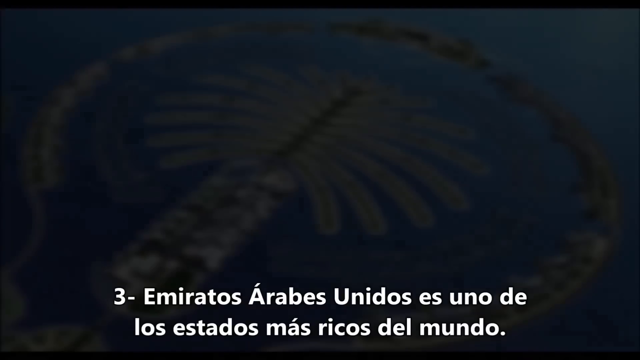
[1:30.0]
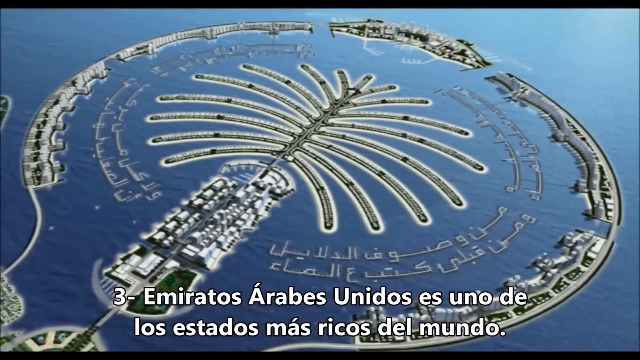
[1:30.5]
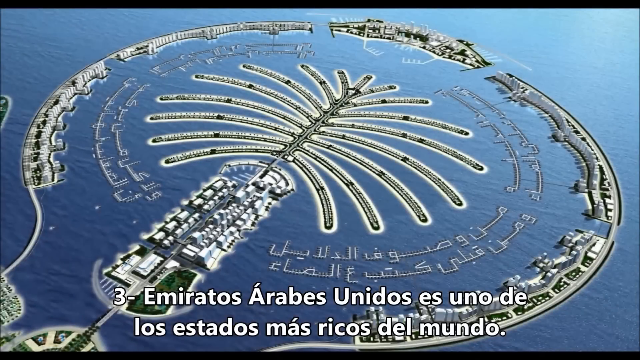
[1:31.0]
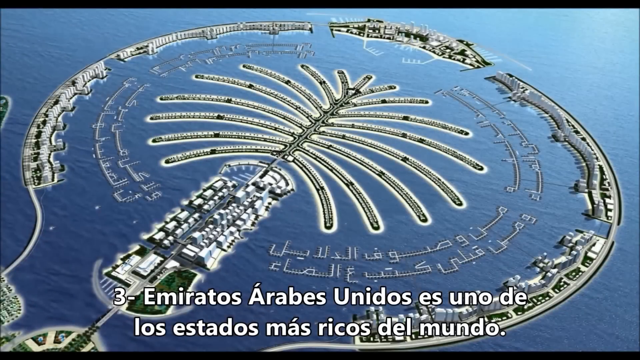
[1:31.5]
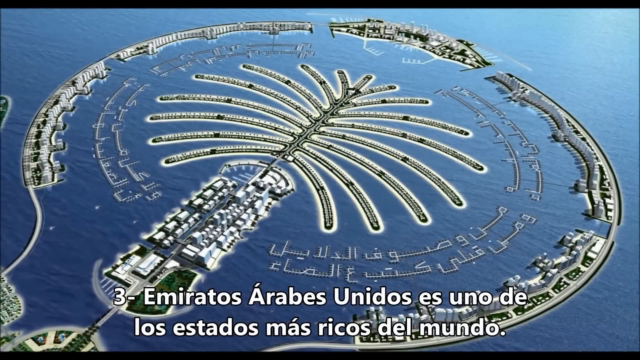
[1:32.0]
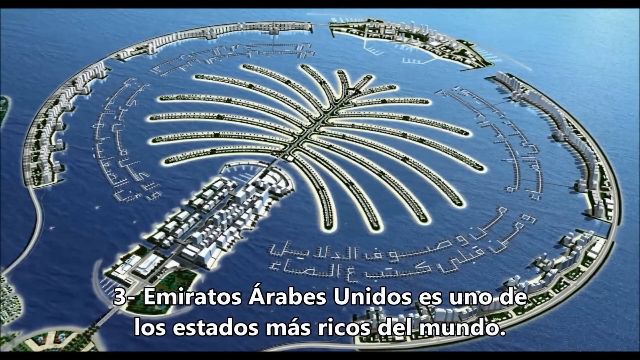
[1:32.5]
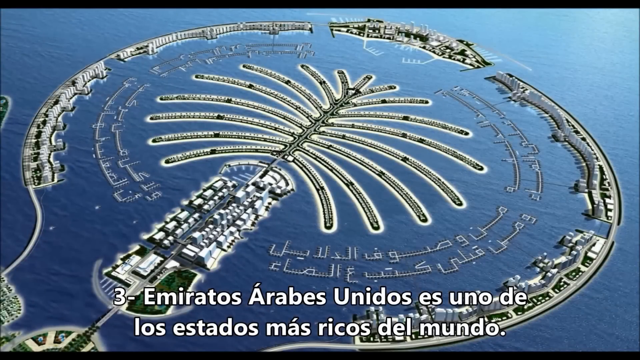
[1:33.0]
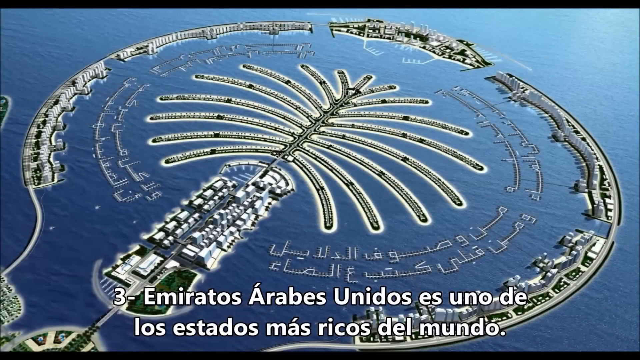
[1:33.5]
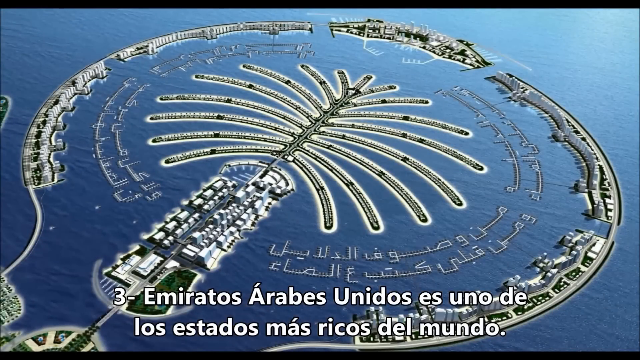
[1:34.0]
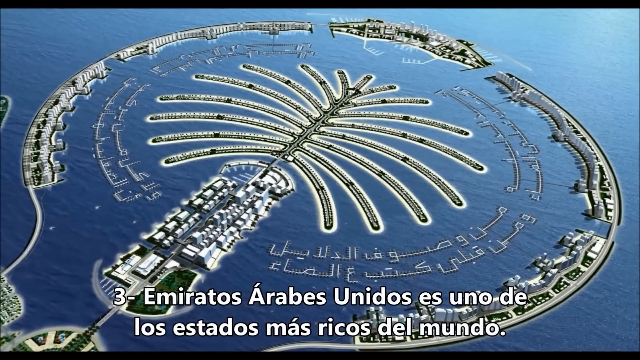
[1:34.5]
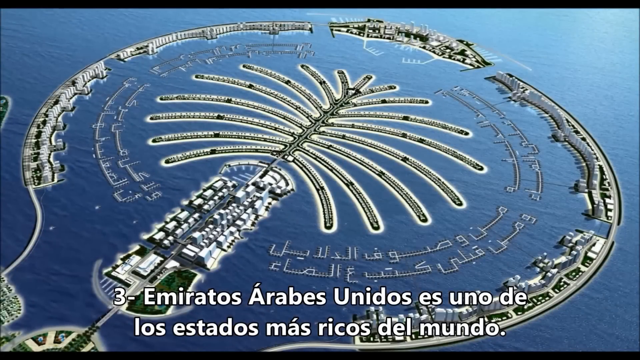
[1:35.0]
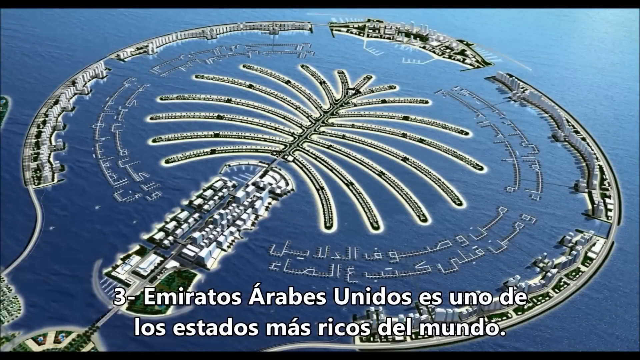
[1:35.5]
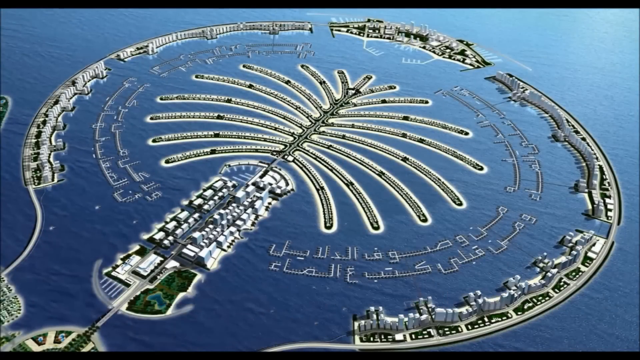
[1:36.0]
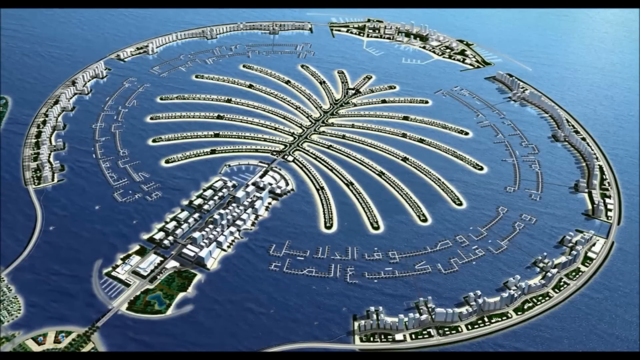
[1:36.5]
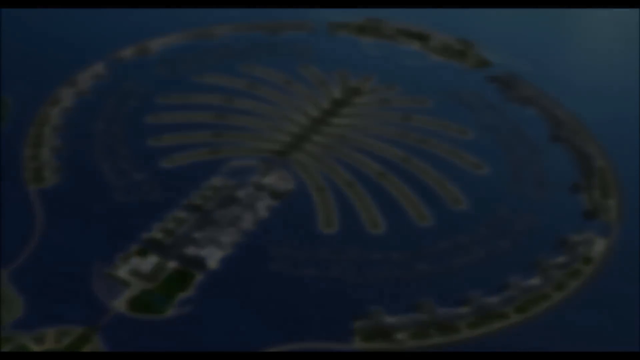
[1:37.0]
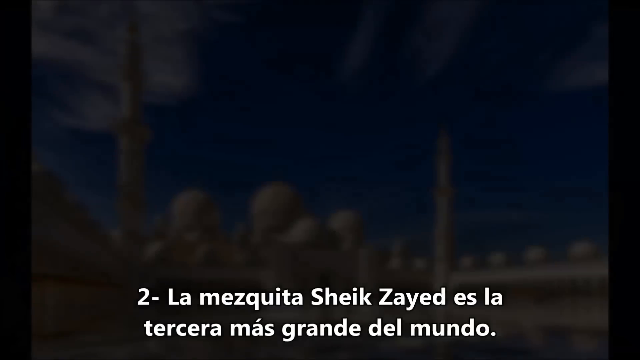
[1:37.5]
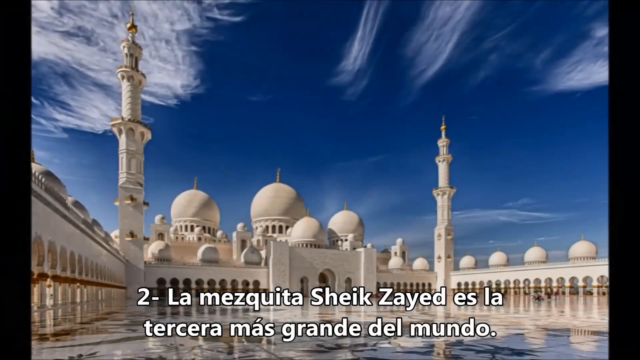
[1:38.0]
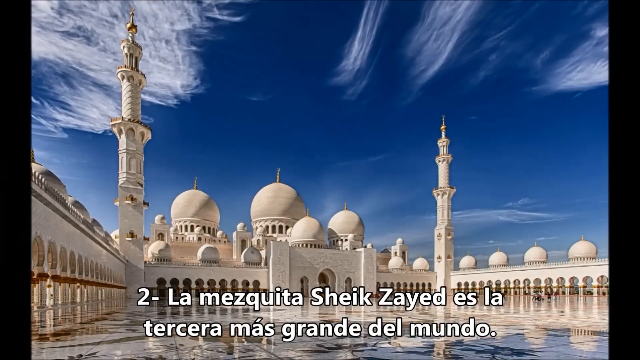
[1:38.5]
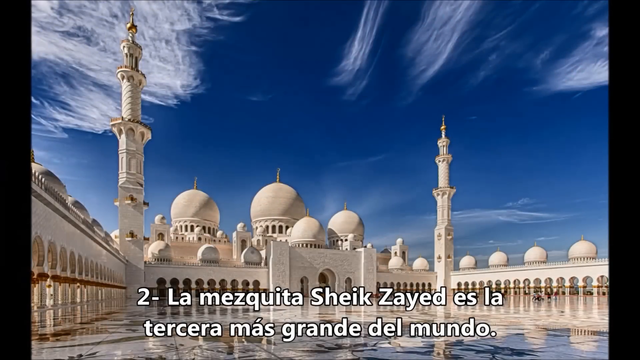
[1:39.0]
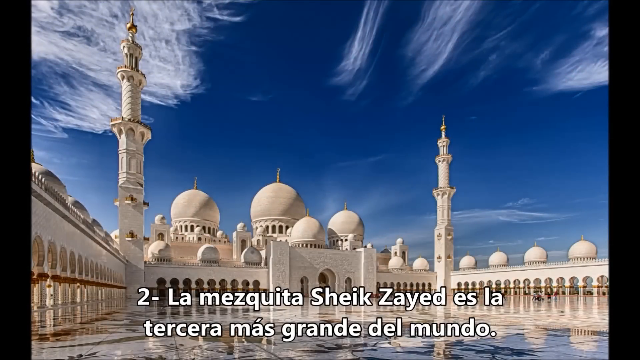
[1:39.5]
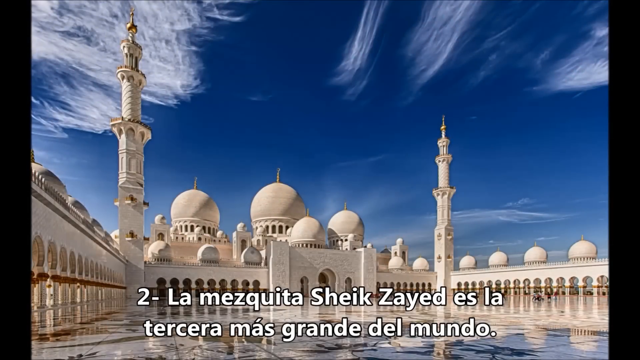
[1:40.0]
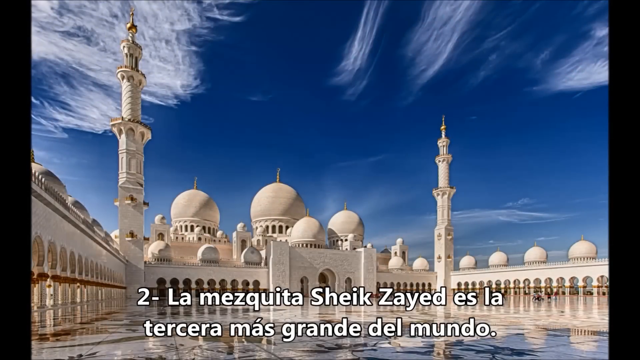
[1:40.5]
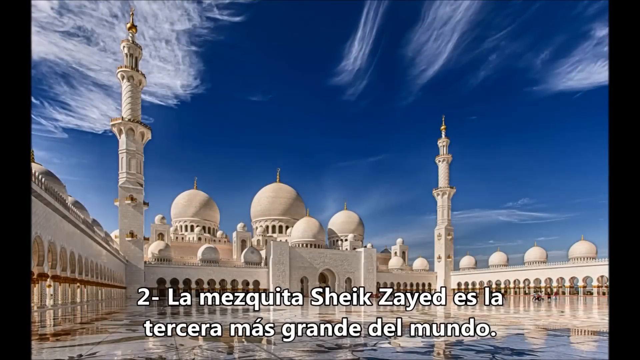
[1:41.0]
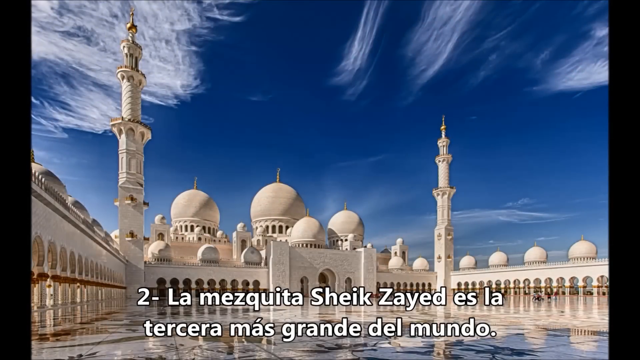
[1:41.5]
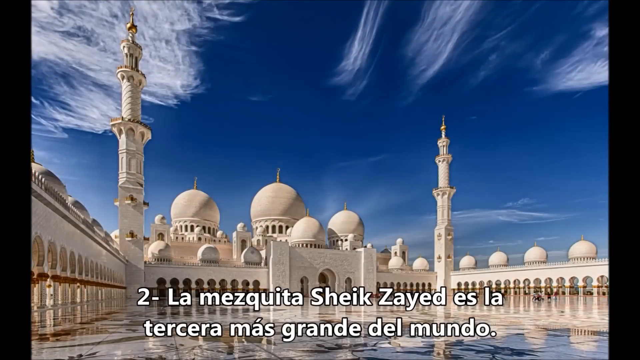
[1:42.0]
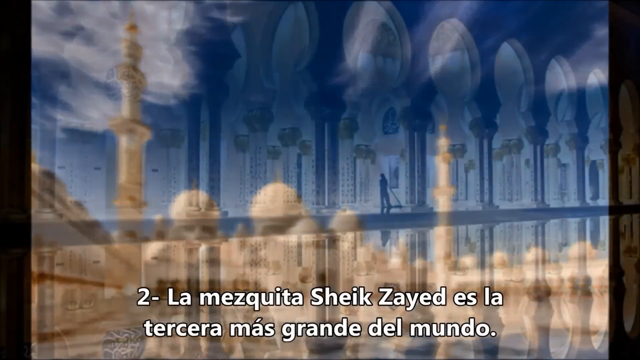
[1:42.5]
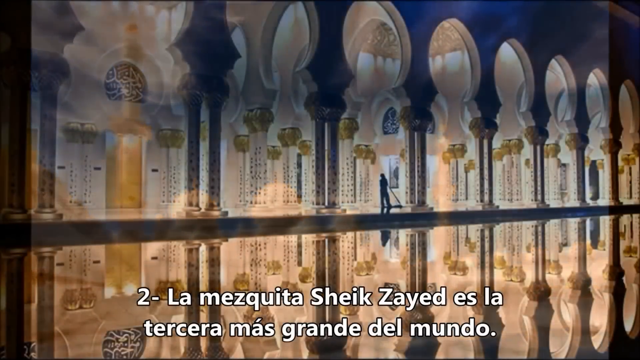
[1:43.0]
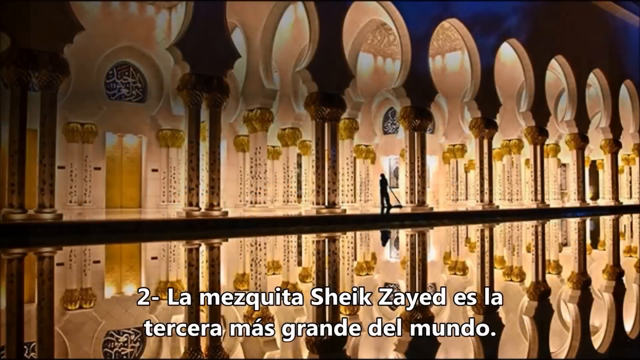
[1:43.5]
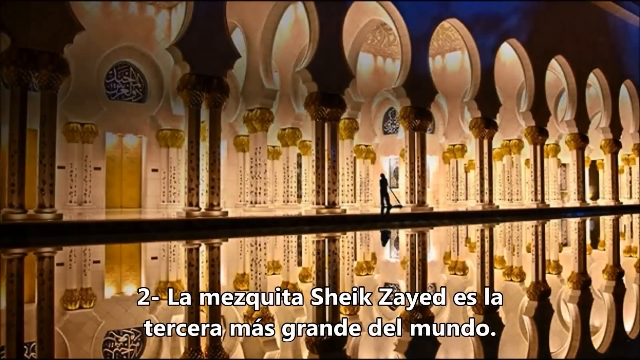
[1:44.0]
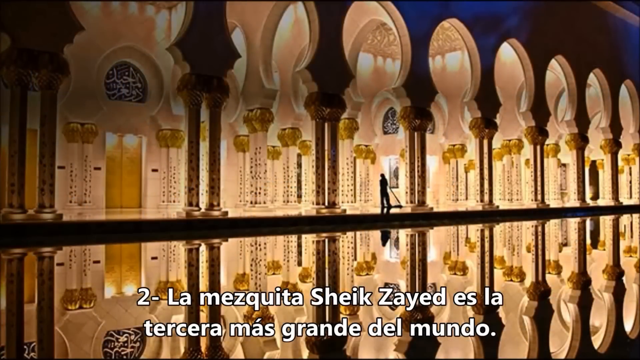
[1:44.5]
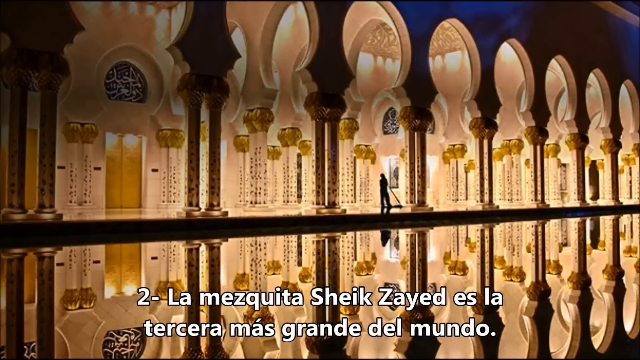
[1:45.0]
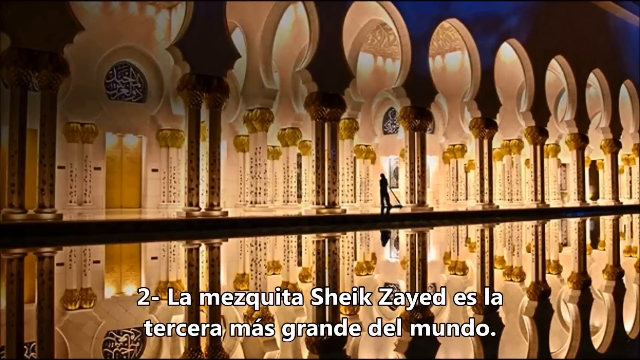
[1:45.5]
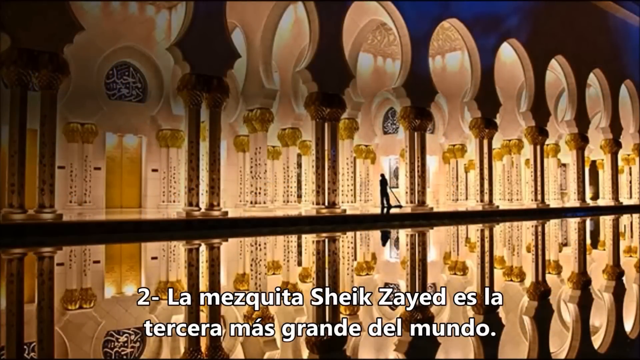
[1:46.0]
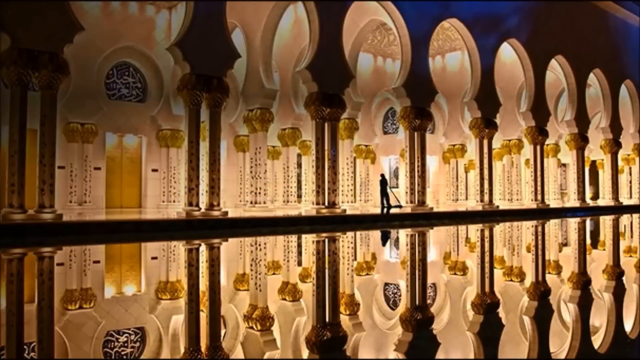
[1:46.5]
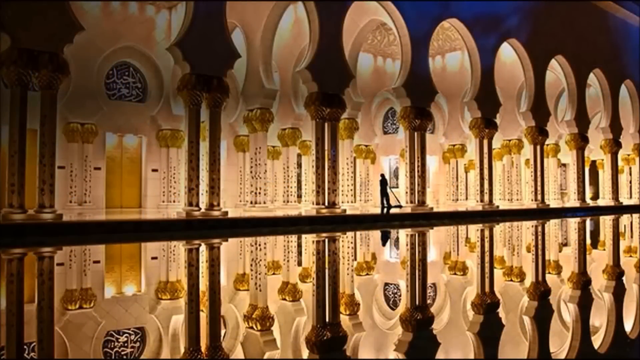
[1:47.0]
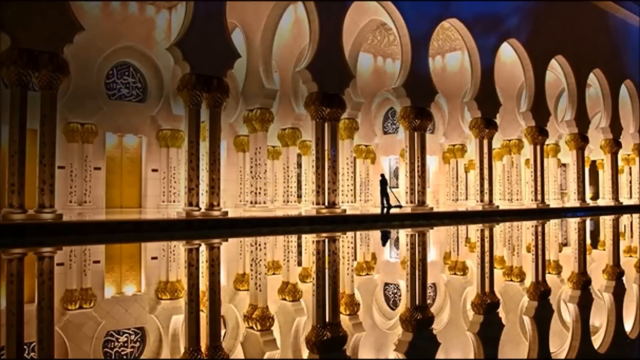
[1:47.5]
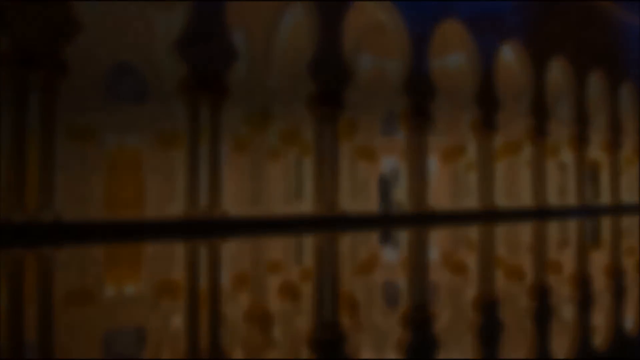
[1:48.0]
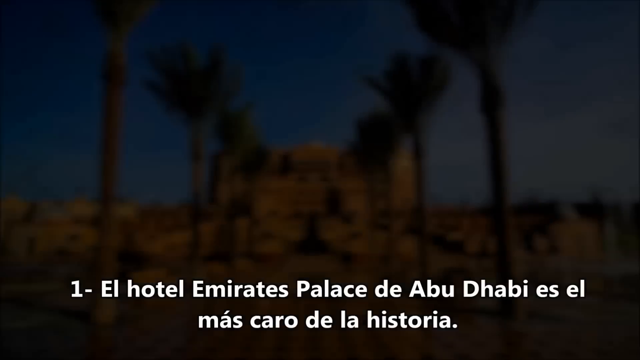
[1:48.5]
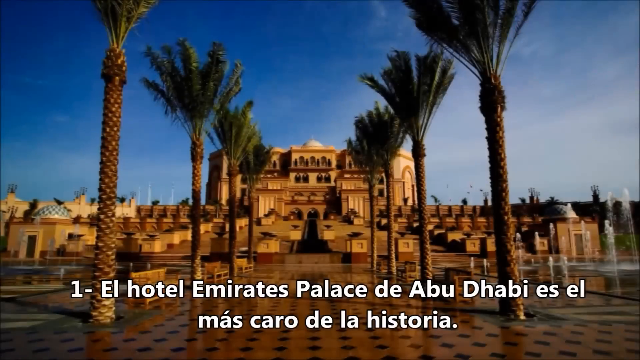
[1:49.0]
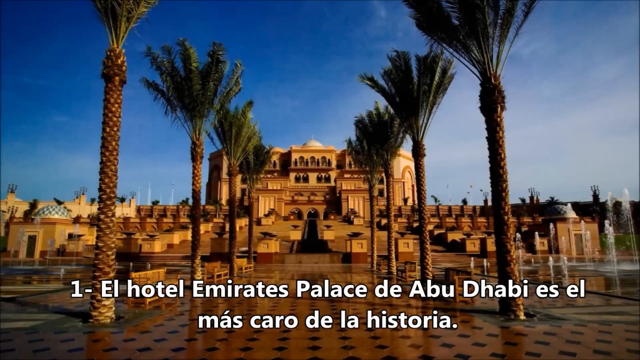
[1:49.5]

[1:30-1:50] A bird's-eye view of the UAE shows the country looking like one giant island connected to other parts by what seem to be bridge-like structures or ferries, with the entire country surrounded by water. The countdown runs from three to one. Number 2 is a religious structure shown in two pictures. The first seems to show its exterior, which looks like a mosque, with at least four domes in the center and a bunch of smaller domes lining the walls. The interior is very ornate and looks to have stained glass windows. Number 1 is what seems to be a hotel made from a palace.